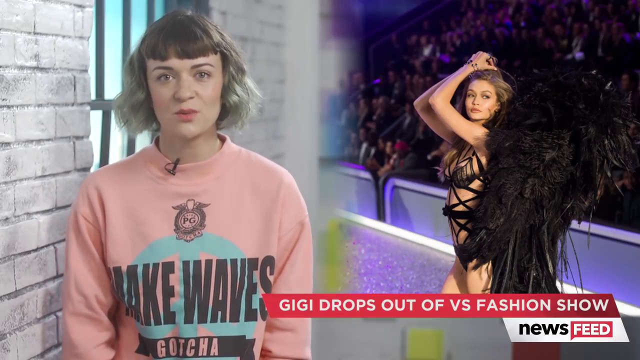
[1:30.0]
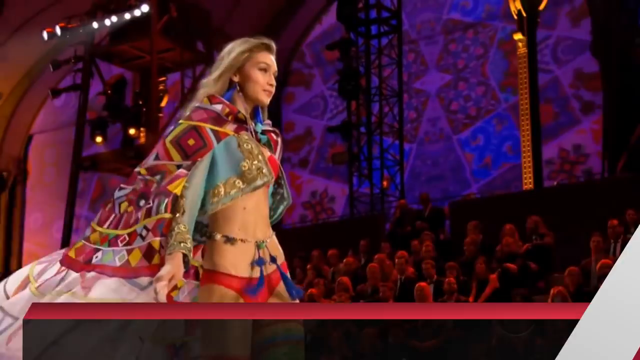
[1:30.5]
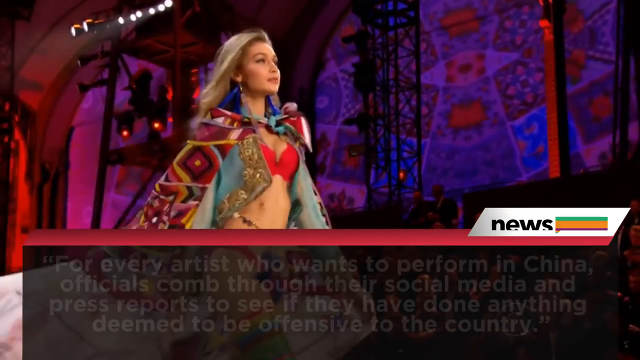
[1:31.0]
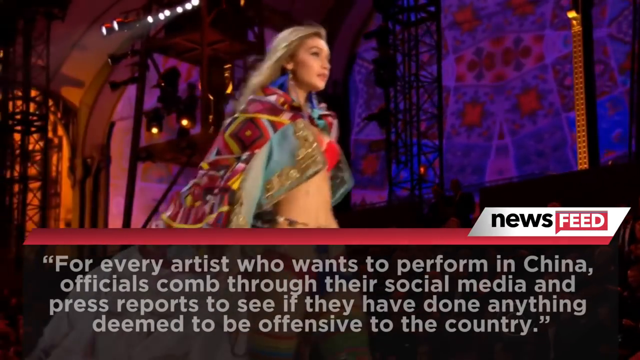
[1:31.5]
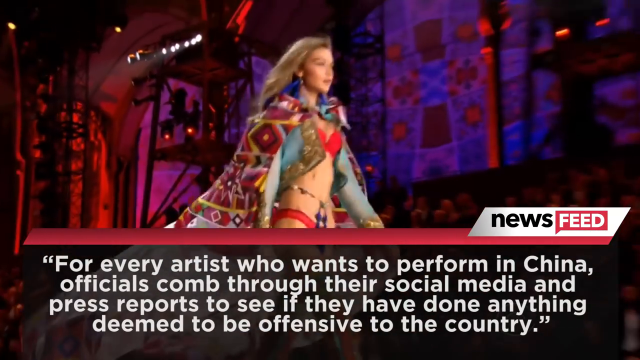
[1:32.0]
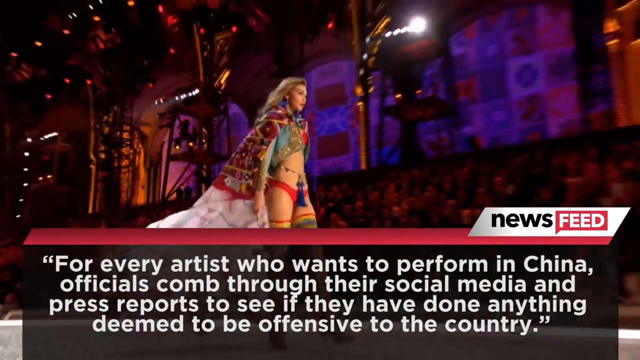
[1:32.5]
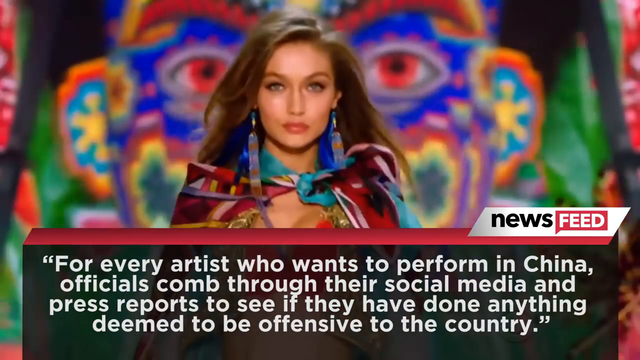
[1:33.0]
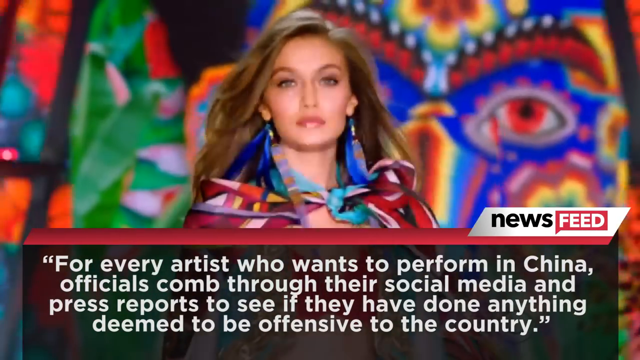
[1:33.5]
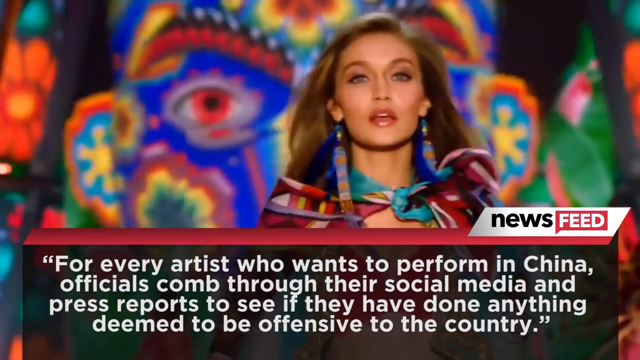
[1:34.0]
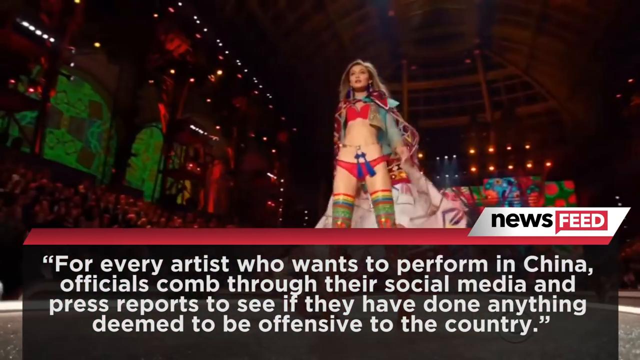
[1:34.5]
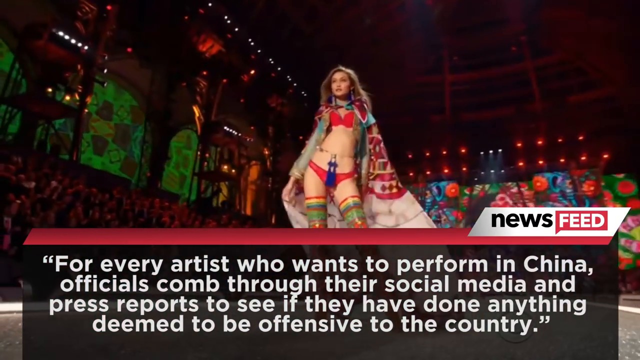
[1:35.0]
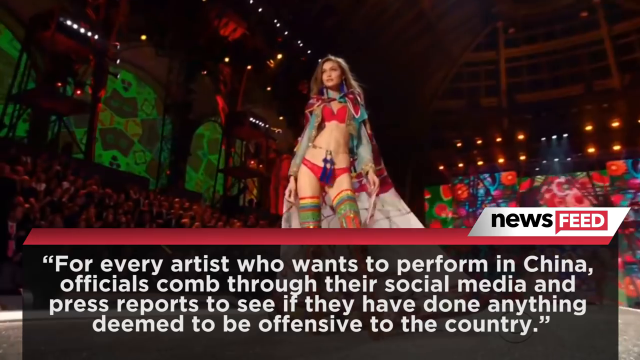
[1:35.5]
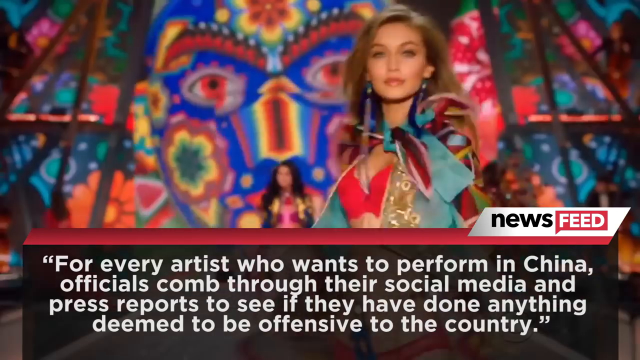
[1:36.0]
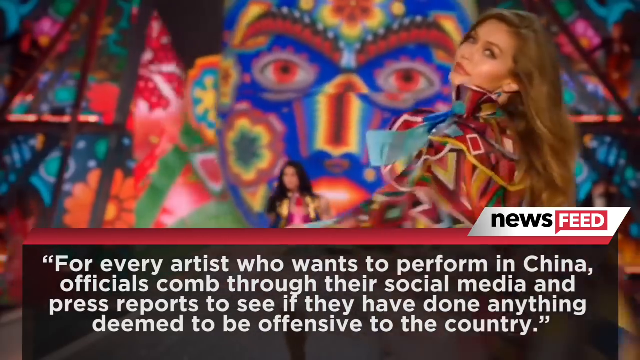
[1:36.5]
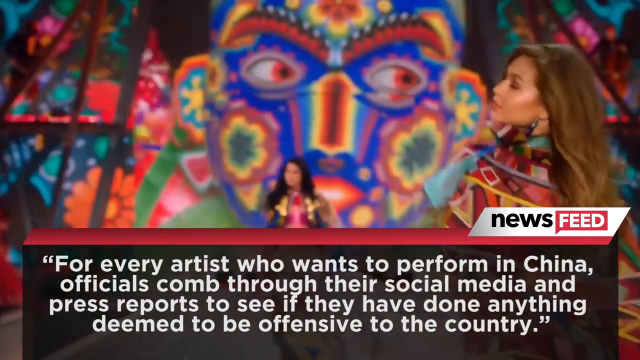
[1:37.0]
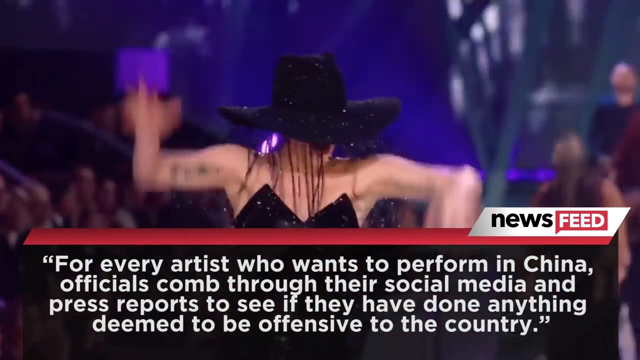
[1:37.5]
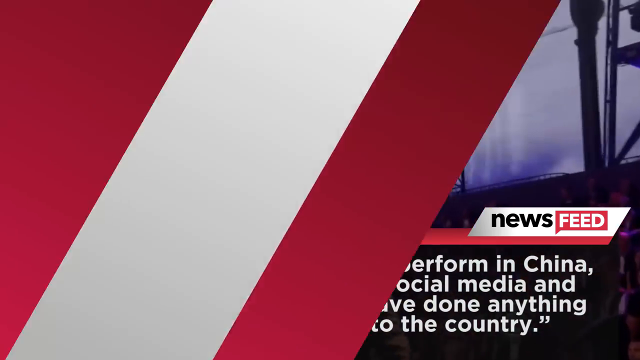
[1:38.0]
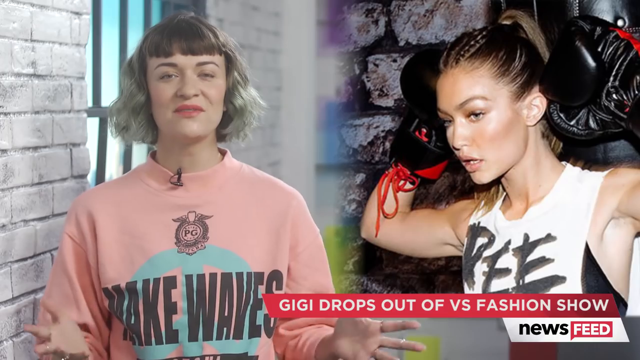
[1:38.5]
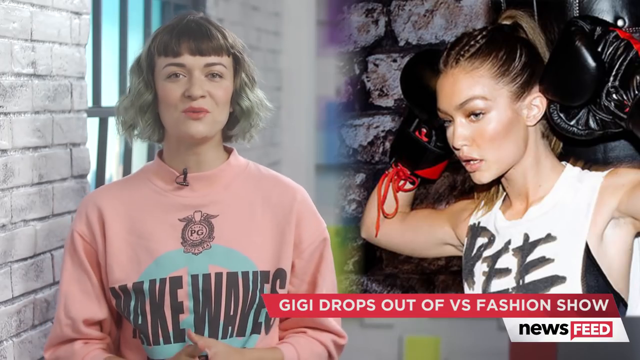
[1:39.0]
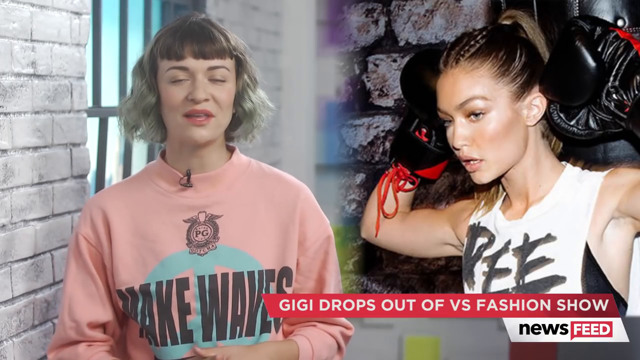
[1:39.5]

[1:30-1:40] The woman on the left continues to talk beside a picture of Gigi Hadid on the right, wearing an outfit that is mostly just black strings with feathers attached to the back that are almost as big as she is. The video then shows a model walking down a runway in red, in what looks like a bikini, and a cape. White text appears at the bottom: "For every artist who wants to perform in China, officials comb through their social media and press reports to see if they have done anything deemed to be offensive to the country." Another angle shows the model walking straight forward, with just her head and shoulders visible above the text, followed by a shot of her entire body and several other shots of her in different poses and different outfits. It then returns to the woman speaking on the left, with a picture of Gigi Hadid on the right wearing what look like boxing gloves, her head tilted down, in a white tank top with the letters "D.E.E." on it, which look like they were made with a paintbrush.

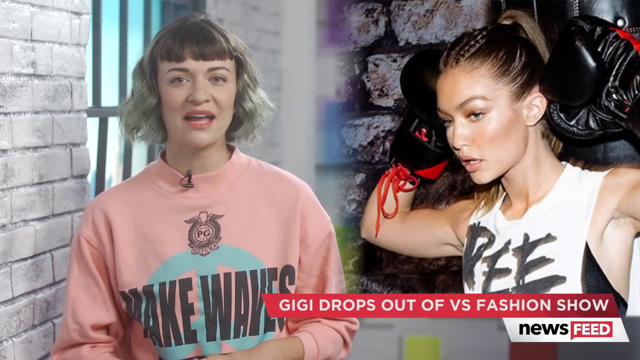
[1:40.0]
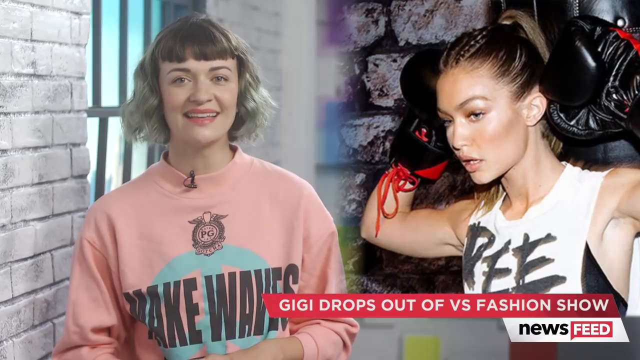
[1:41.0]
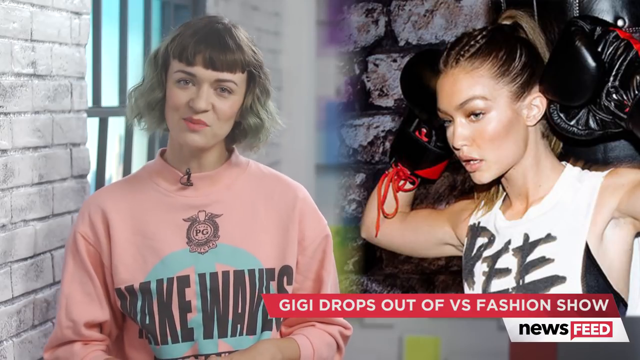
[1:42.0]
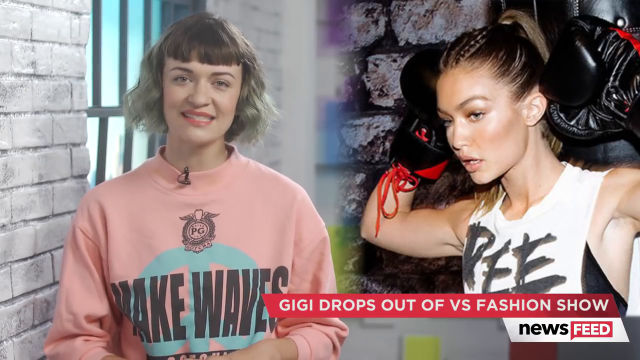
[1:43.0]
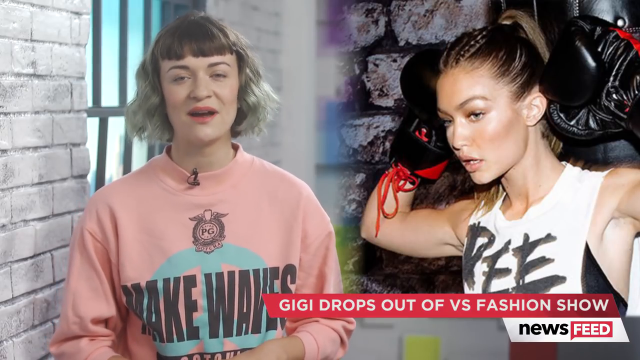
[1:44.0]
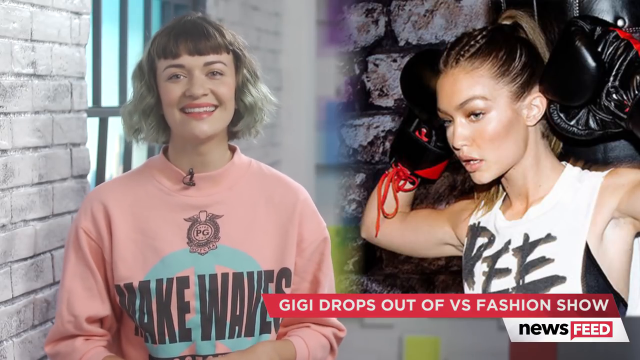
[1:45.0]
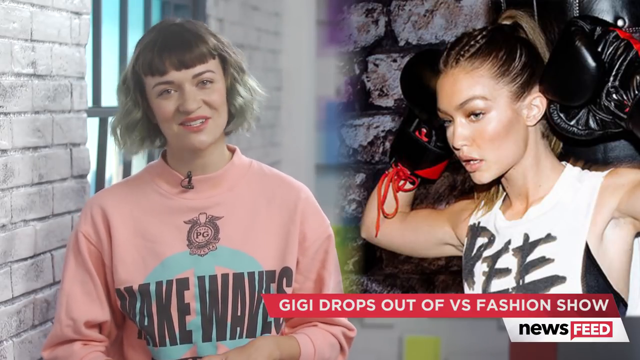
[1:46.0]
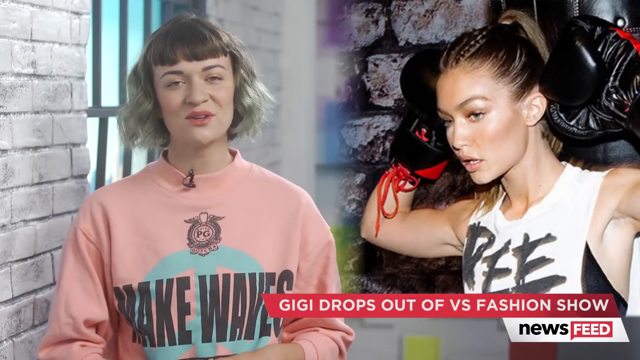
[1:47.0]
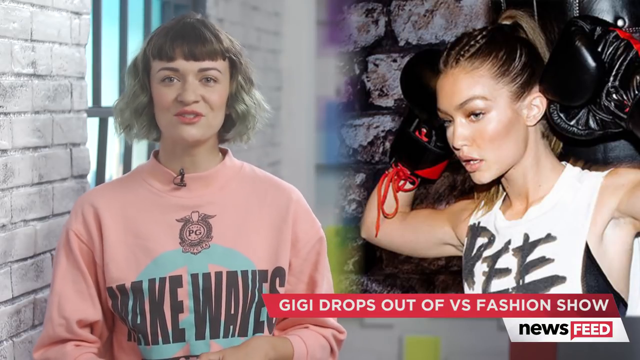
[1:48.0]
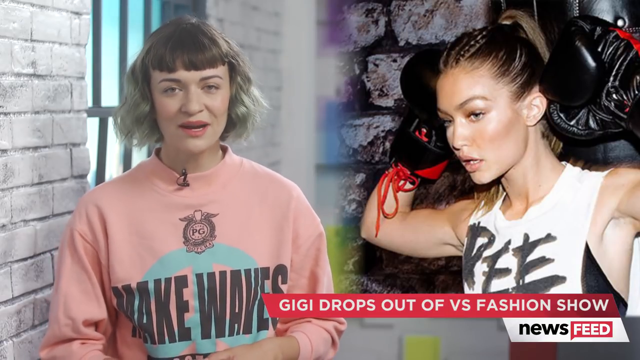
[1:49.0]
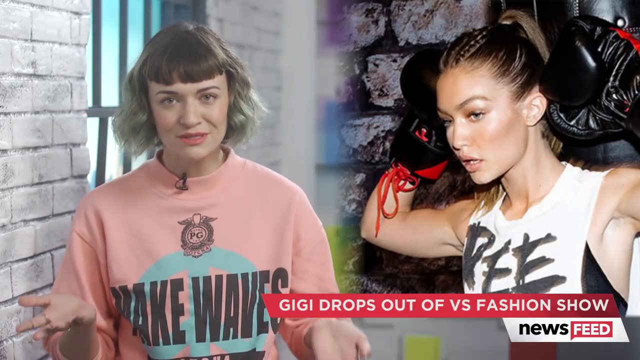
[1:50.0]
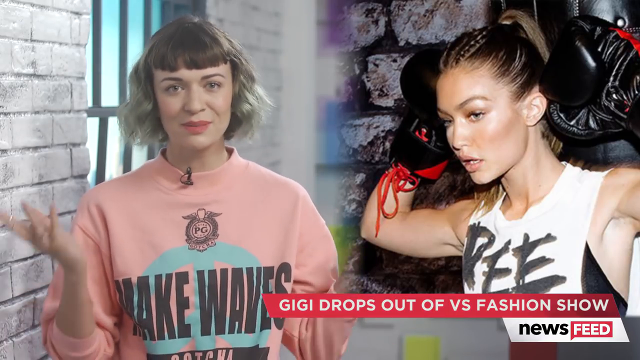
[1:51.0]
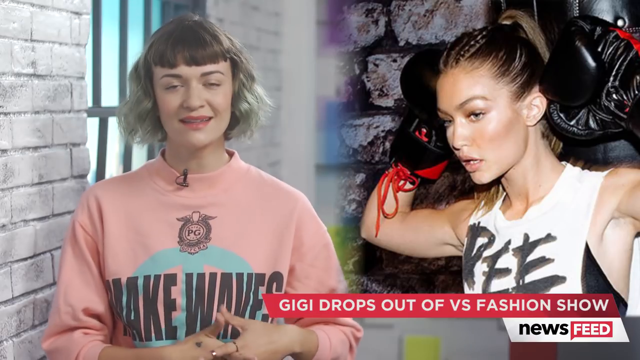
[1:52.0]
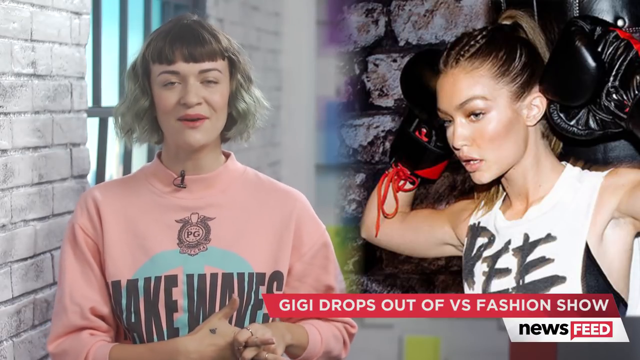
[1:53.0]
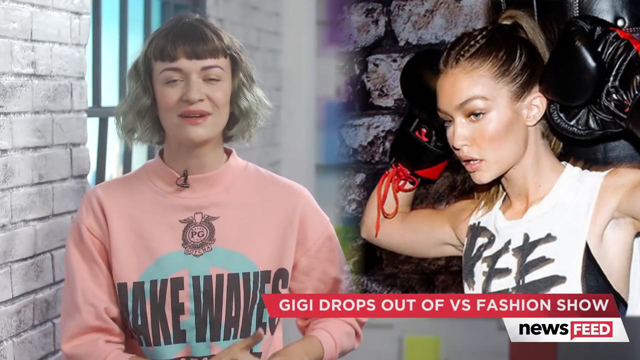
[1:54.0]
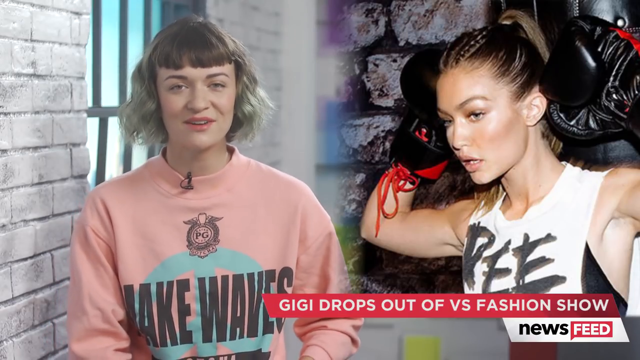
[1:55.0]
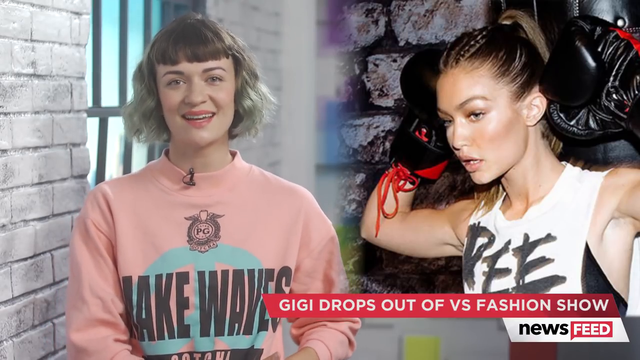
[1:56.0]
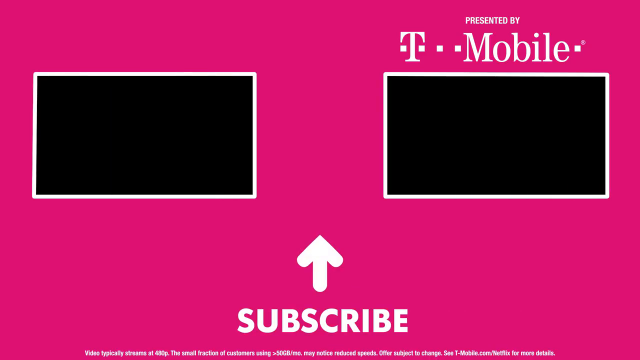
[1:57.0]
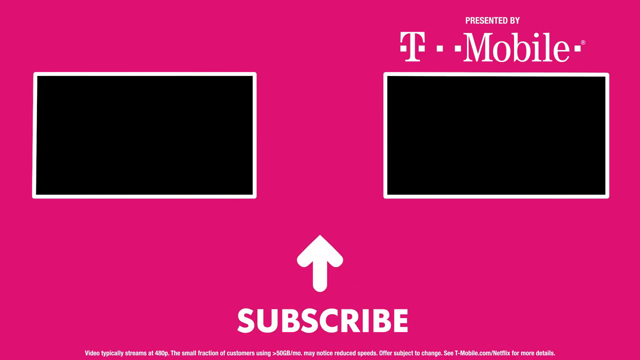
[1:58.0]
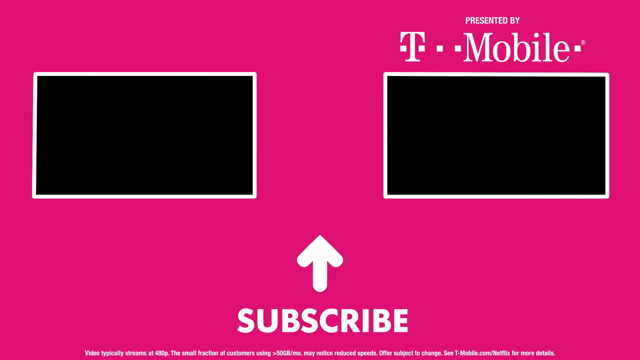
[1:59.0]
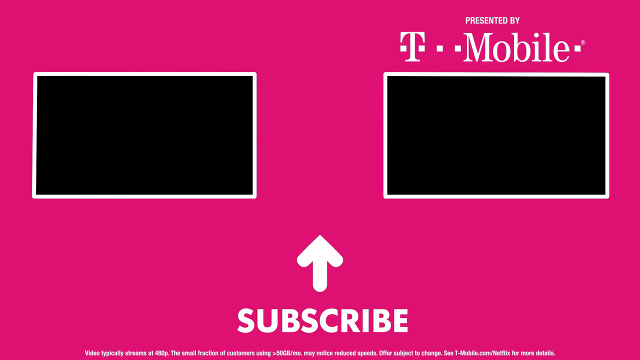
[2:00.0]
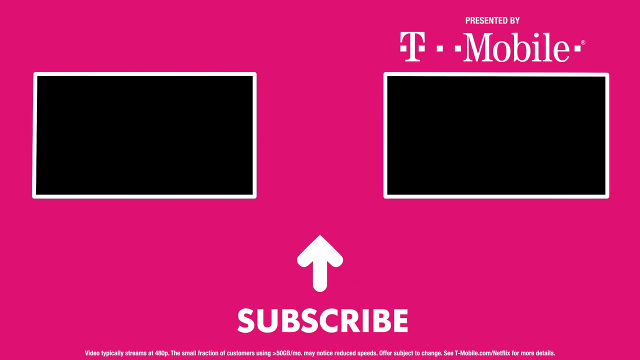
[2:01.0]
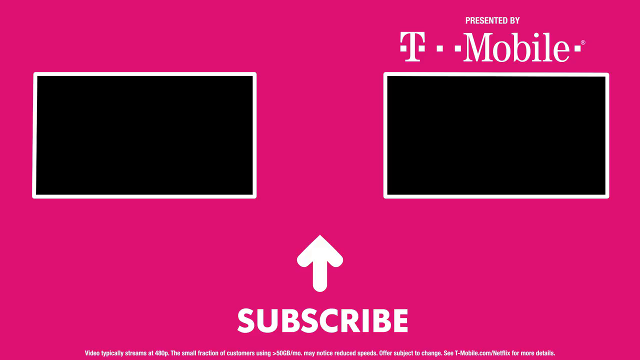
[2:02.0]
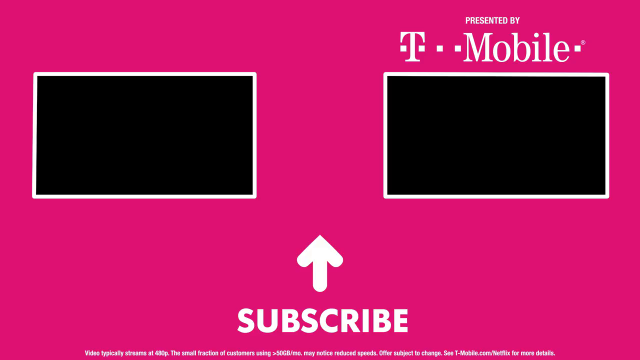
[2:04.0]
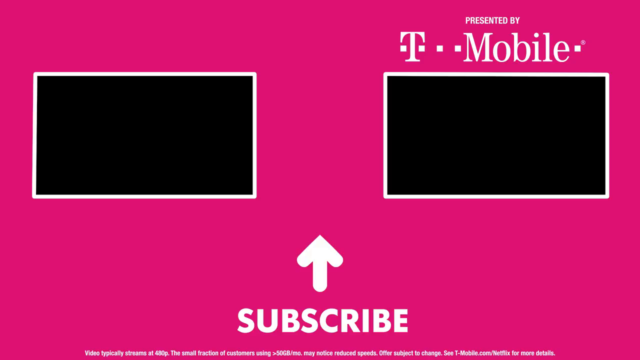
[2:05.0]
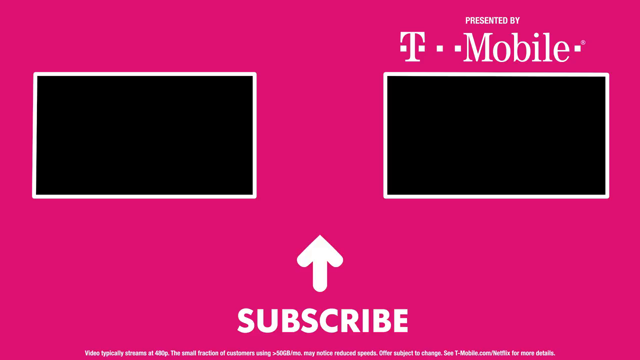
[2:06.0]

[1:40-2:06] The woman continues talking on the left, next to the picture of Gigi Hadid in boxing gloves and a white tank top. A banner across the bottom reads "Gigi drops out of VS Fashion Show", with "News Feed" underneath. The woman tilts her head back and forth and mostly smiles as she talks, looking fairly happy. She begins waving her hands, becoming more animated and really moving them around, her mouth moving very quickly. The video then switches to a T-Mobile advertisement with a pink background and black squares with white outlines on the left and right sides. The upper right reads "presented by T-Mobile", and at the bottom is "subscribe" with an arrow pointing upward.